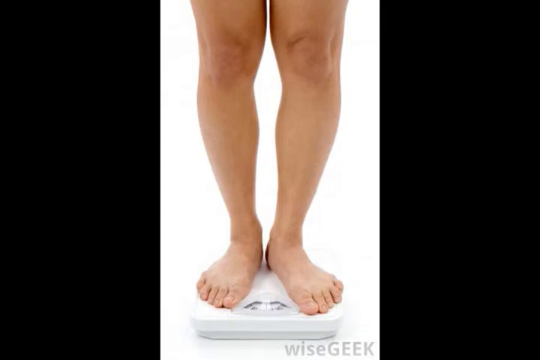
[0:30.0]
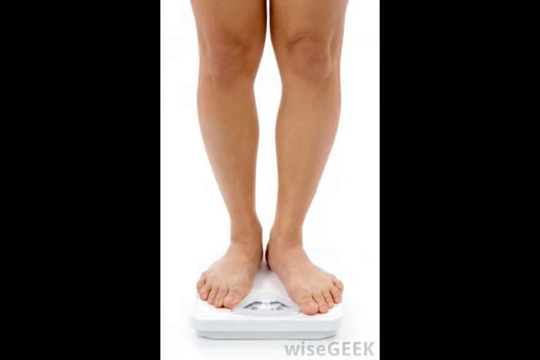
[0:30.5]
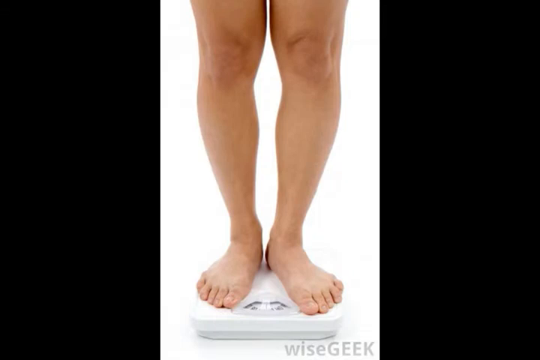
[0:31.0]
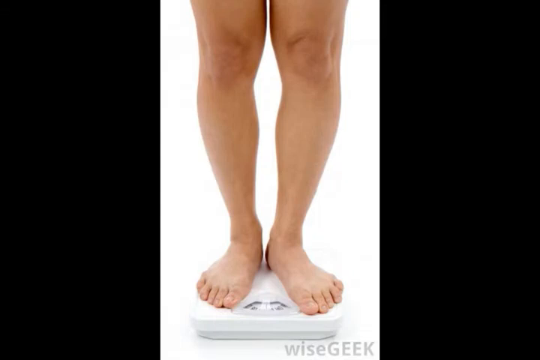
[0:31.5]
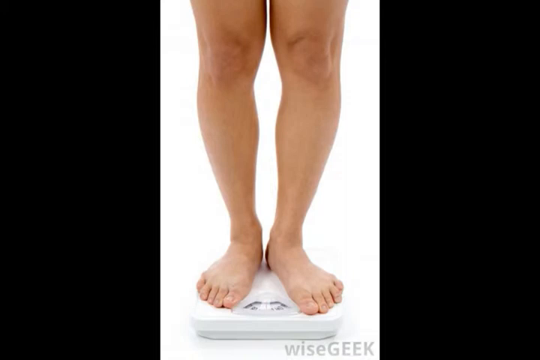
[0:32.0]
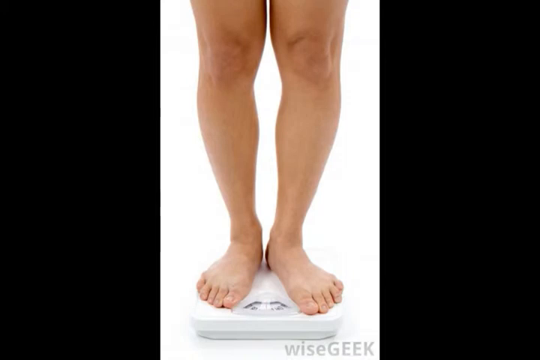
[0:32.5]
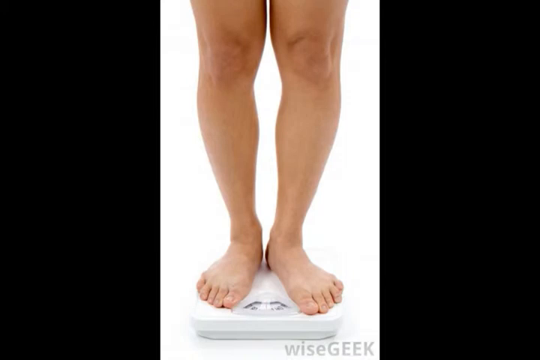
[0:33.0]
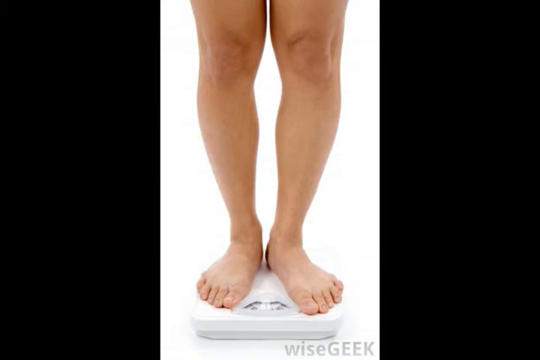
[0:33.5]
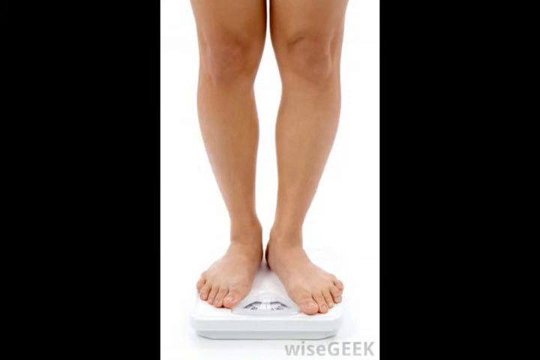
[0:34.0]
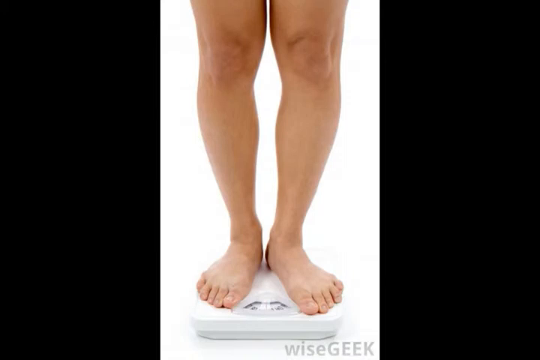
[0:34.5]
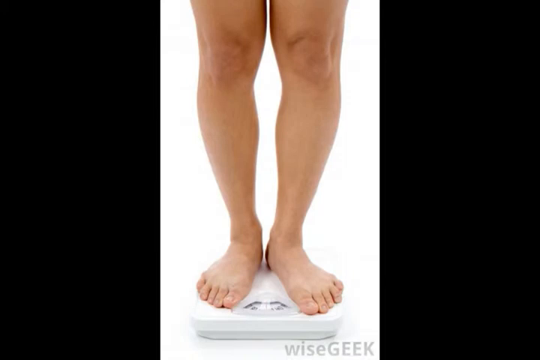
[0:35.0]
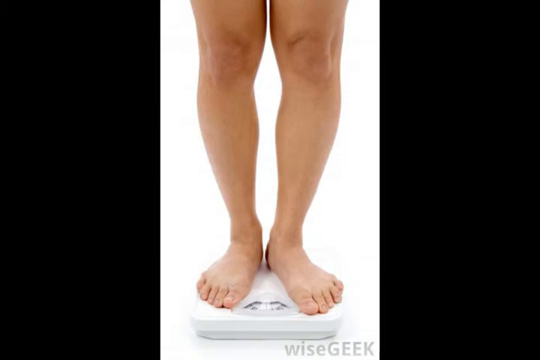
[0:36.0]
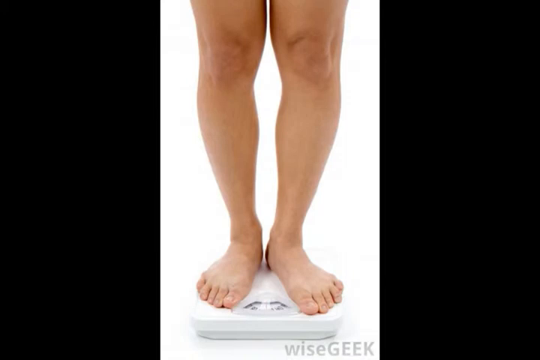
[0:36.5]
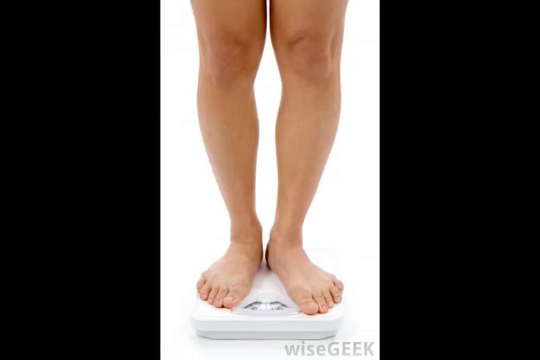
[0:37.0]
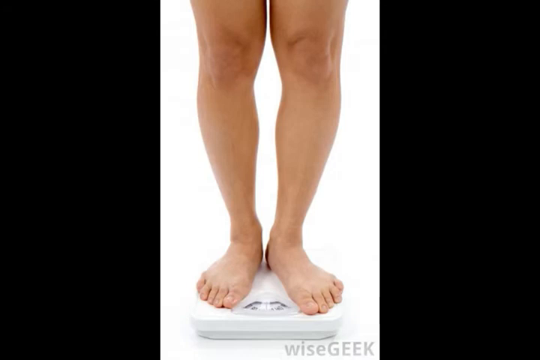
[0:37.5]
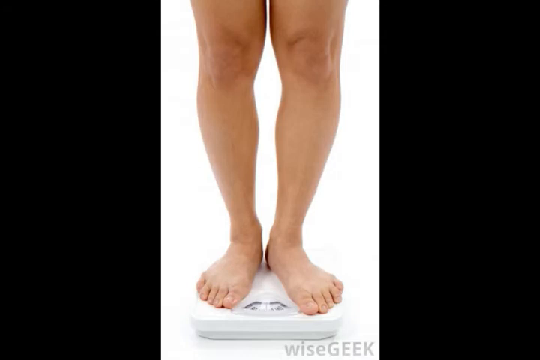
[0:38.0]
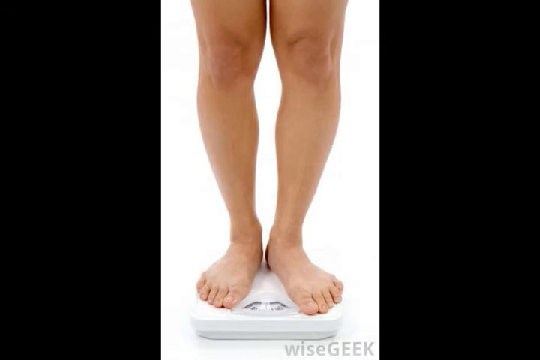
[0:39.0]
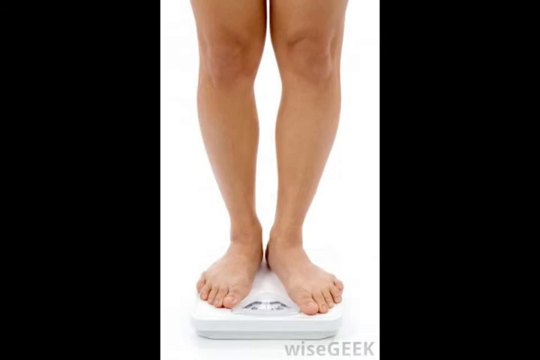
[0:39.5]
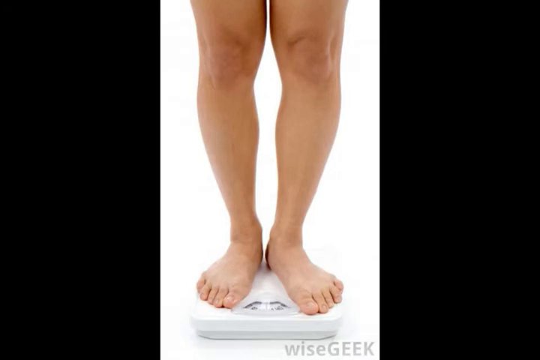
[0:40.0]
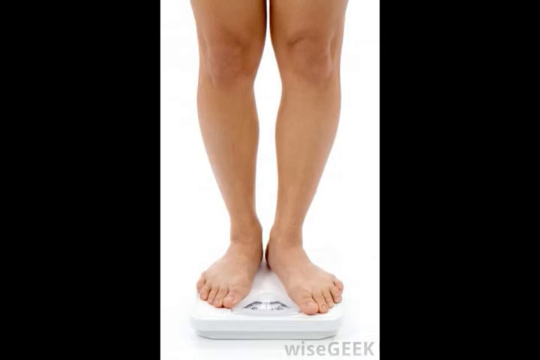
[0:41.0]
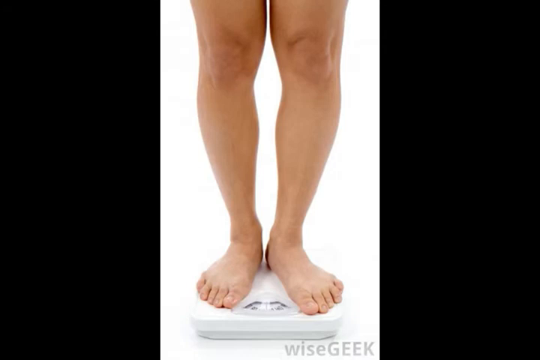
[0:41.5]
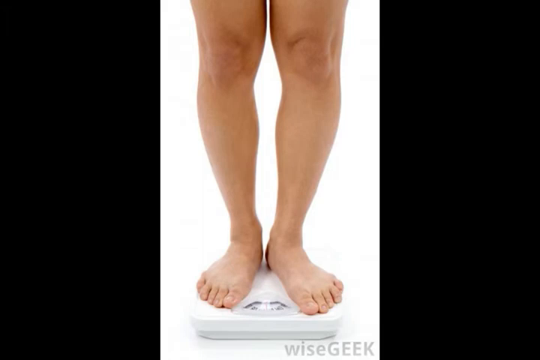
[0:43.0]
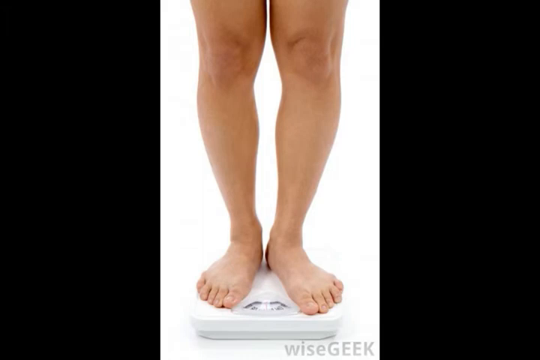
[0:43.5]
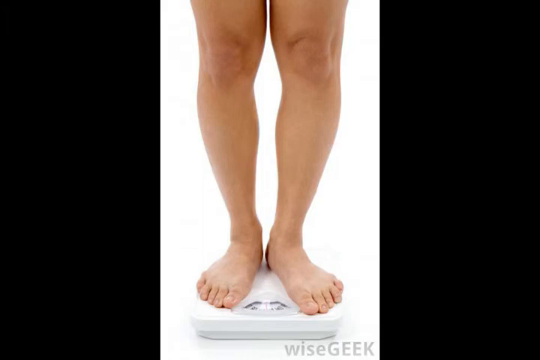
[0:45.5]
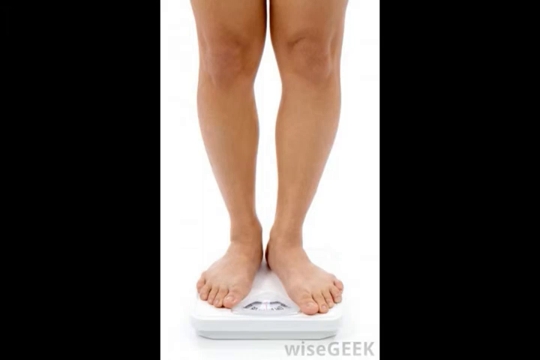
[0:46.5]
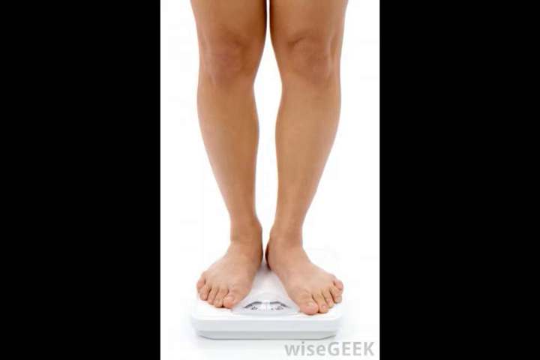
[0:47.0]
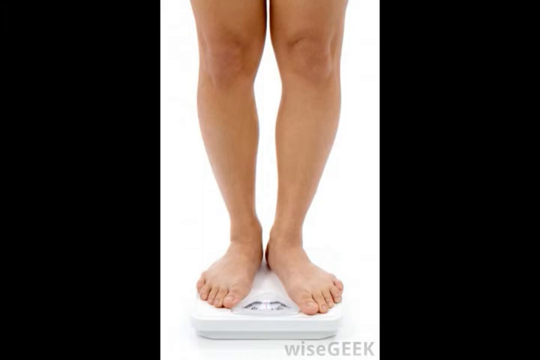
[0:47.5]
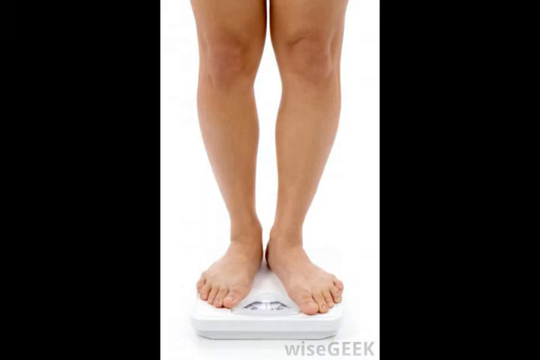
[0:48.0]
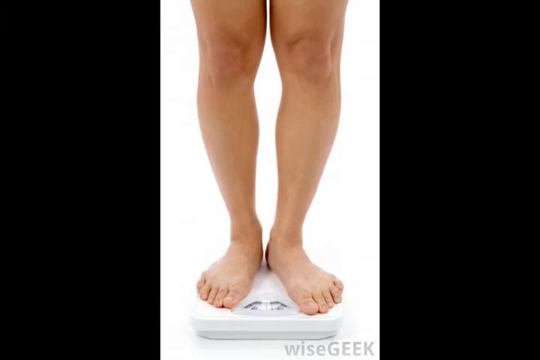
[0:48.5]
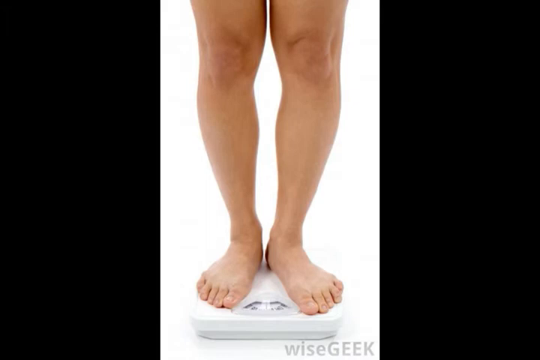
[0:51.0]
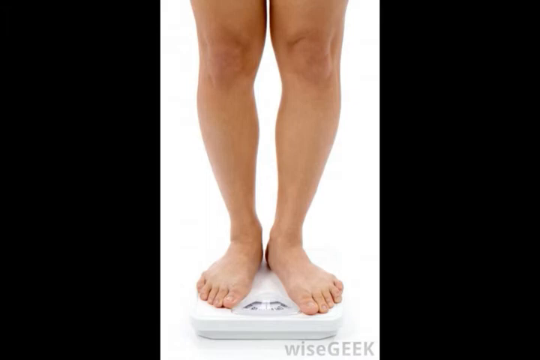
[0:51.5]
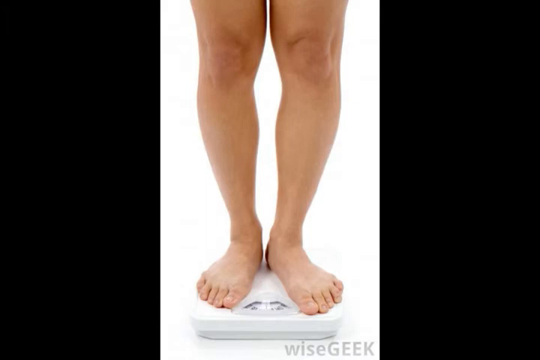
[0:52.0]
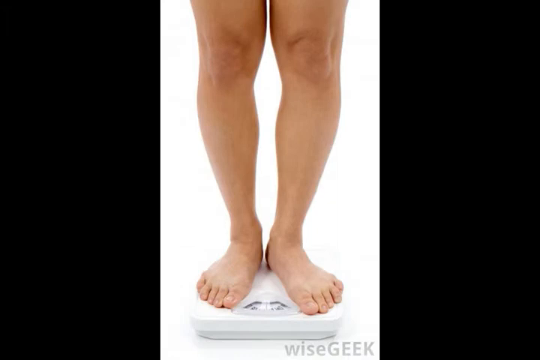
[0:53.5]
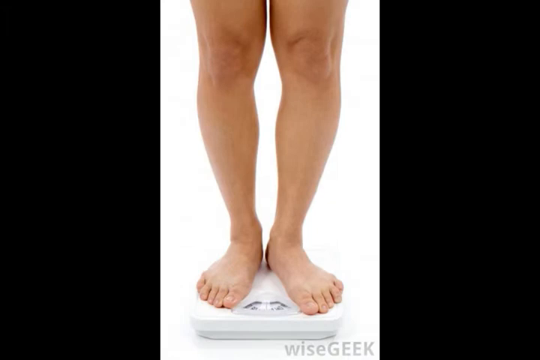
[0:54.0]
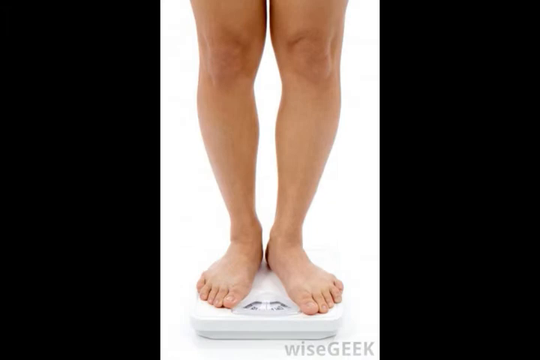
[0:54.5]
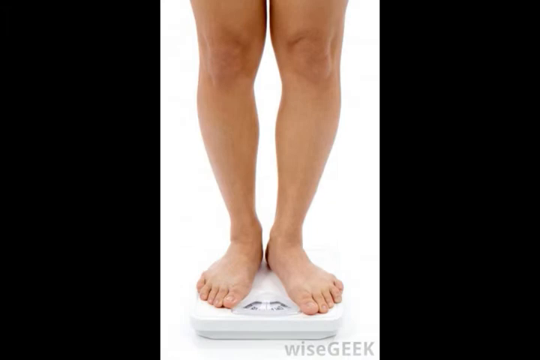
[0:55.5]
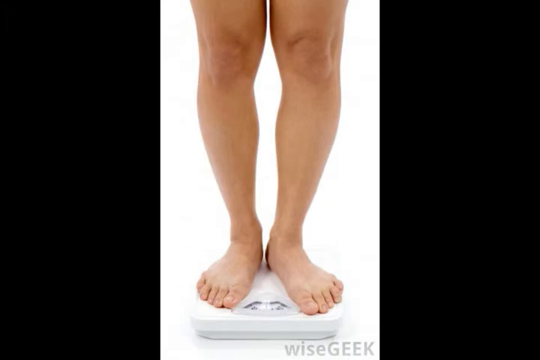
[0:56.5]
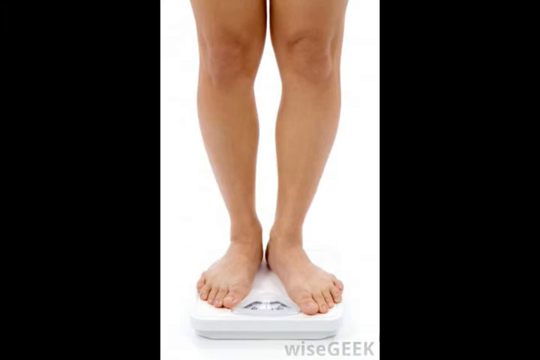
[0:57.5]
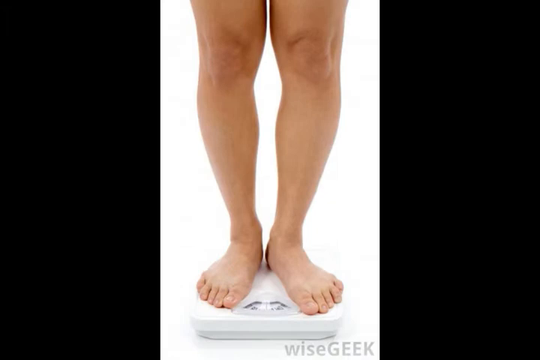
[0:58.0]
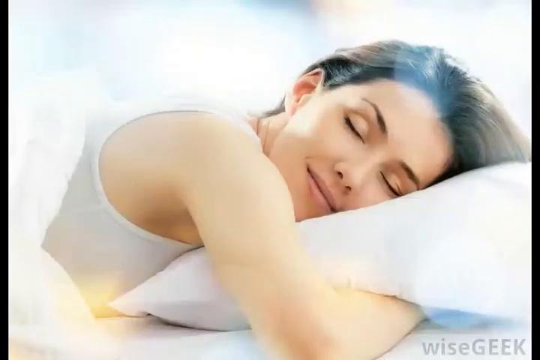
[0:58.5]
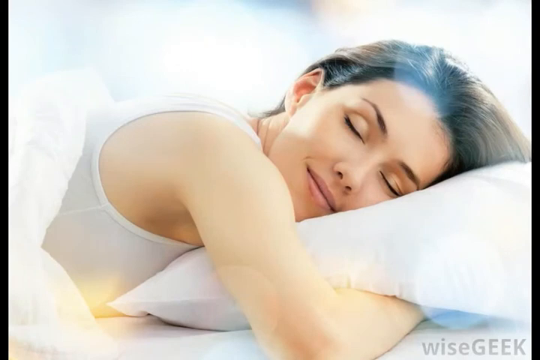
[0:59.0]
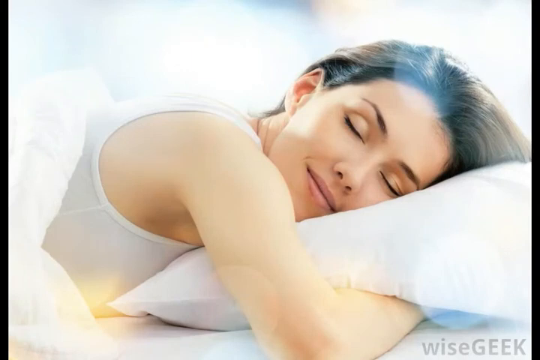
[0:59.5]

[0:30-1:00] A pair of legs, possibly male, is seen from just above the knee down, the feet standing on a set of scales against a white background. This still shot stays on screen for most of the scene. At the end, a shot of a woman with brown hair appears for about two seconds; her eyes are closed, she rests her head on a pillow, and she has a tranquil expression.